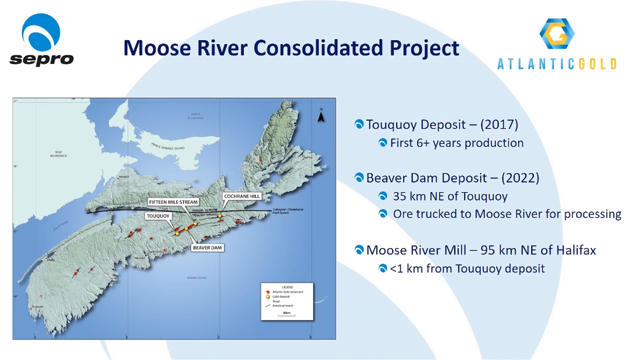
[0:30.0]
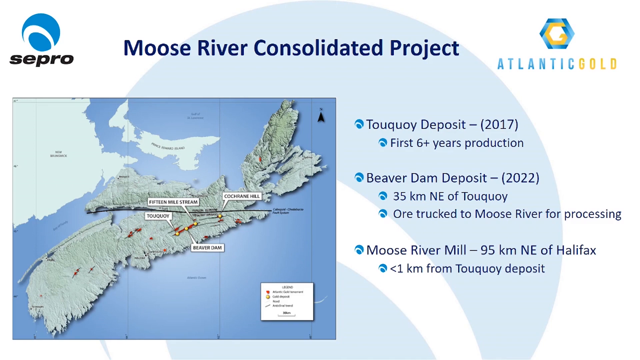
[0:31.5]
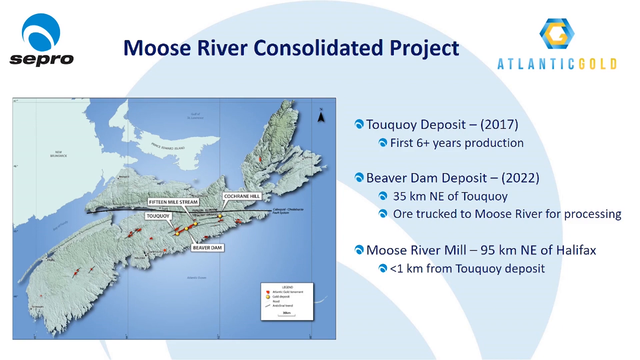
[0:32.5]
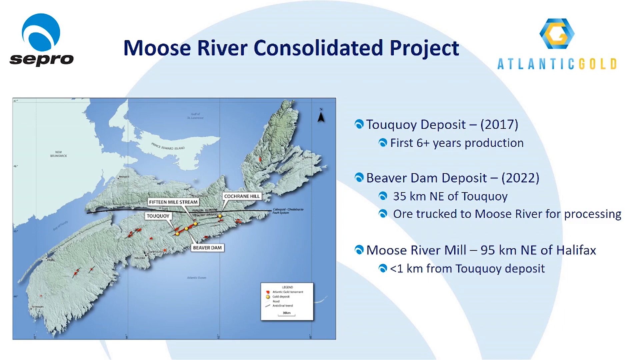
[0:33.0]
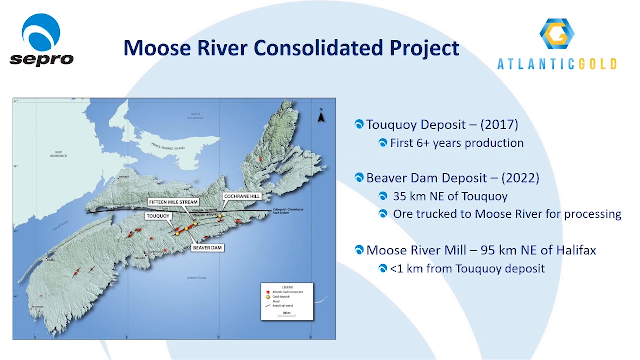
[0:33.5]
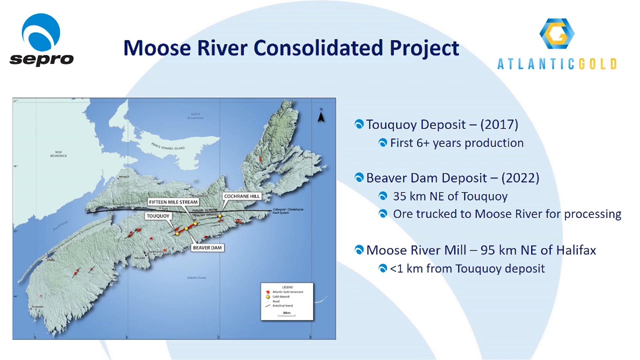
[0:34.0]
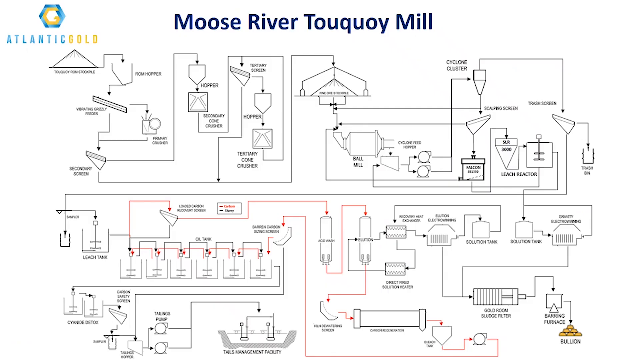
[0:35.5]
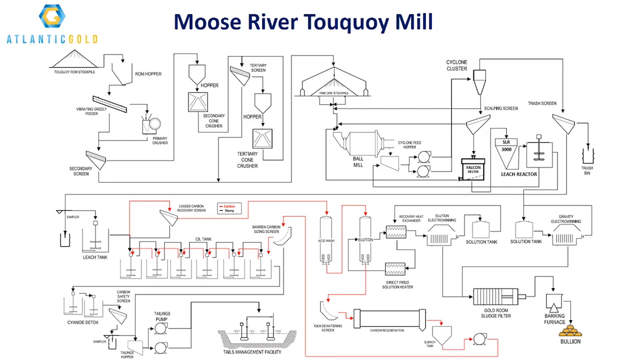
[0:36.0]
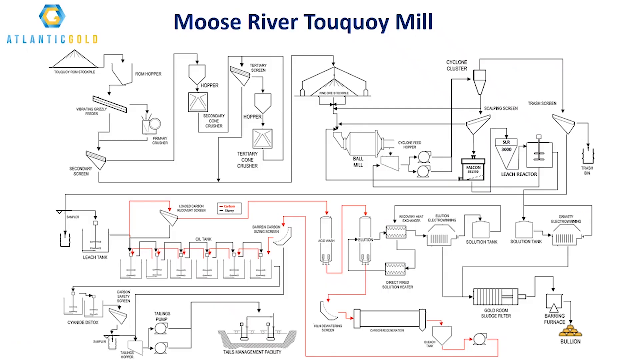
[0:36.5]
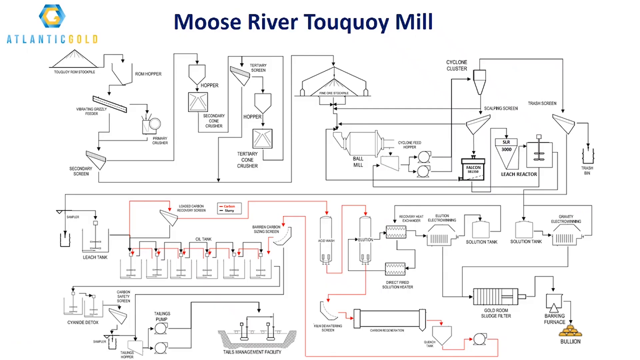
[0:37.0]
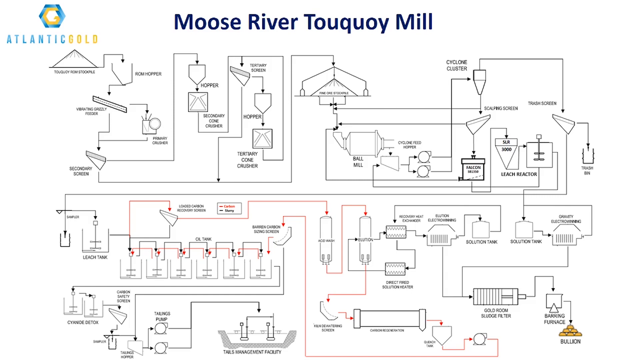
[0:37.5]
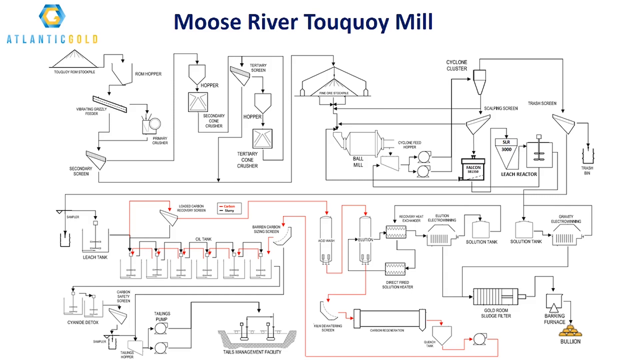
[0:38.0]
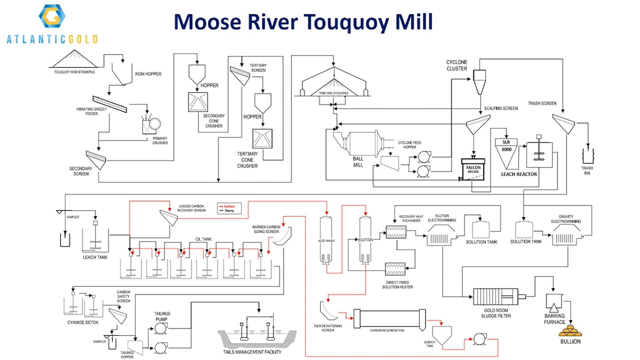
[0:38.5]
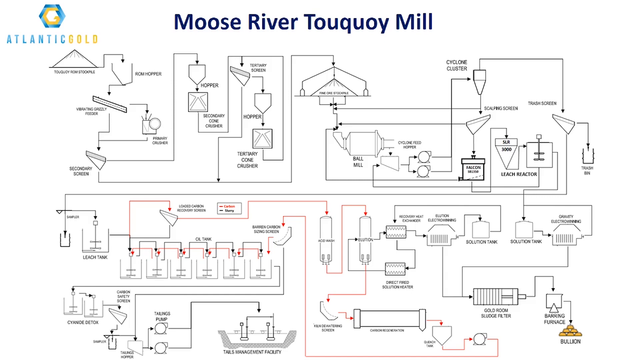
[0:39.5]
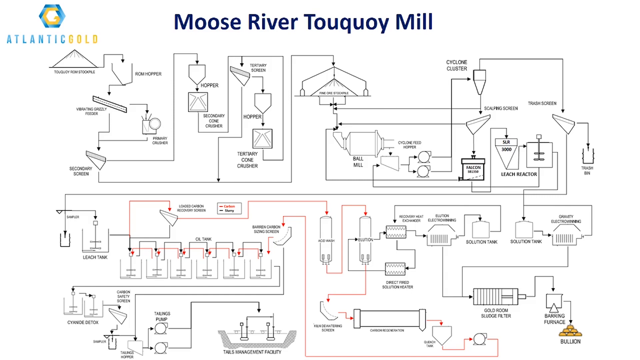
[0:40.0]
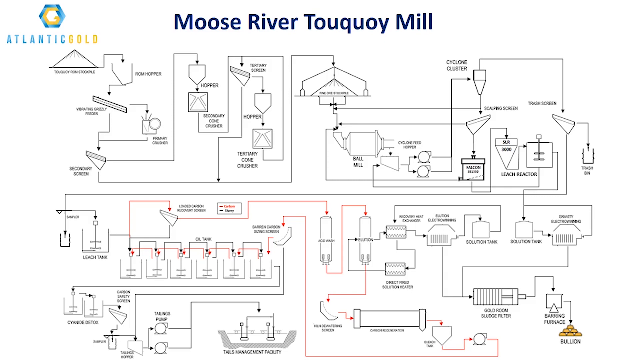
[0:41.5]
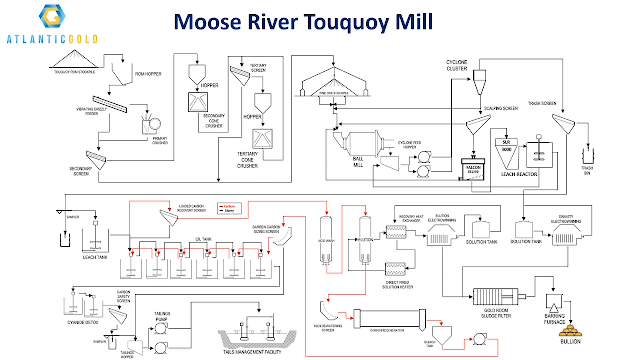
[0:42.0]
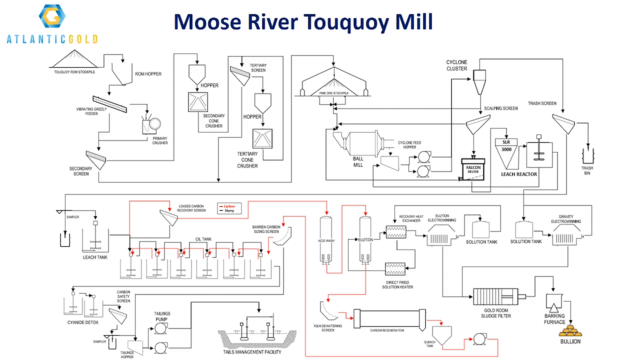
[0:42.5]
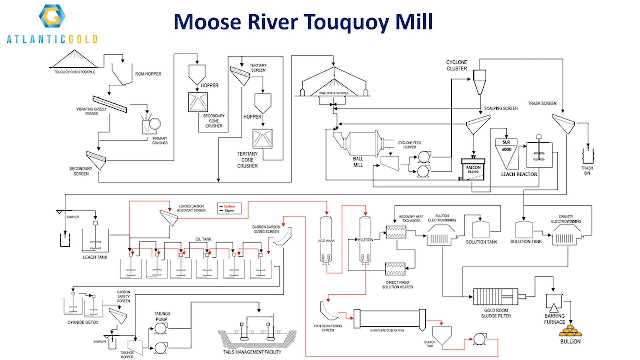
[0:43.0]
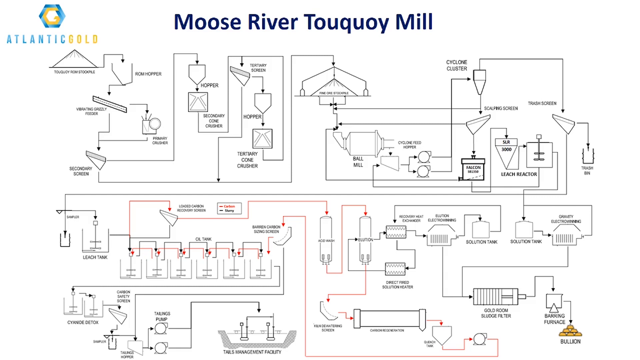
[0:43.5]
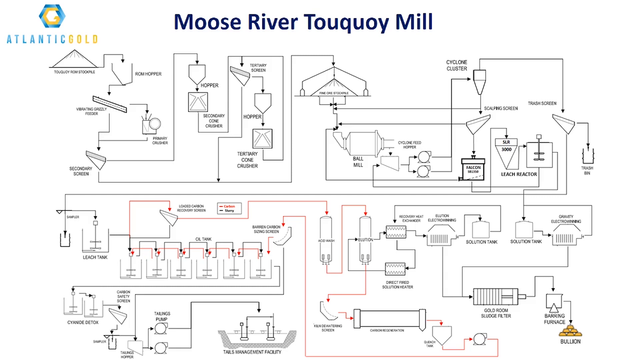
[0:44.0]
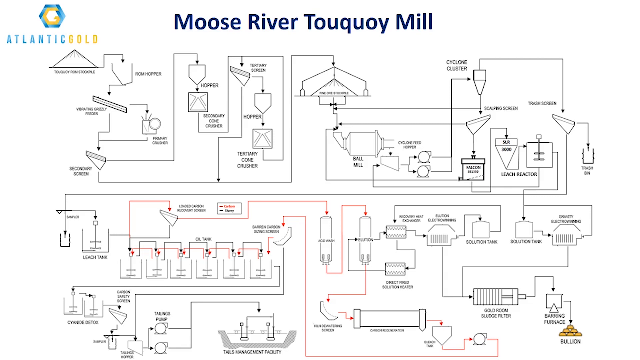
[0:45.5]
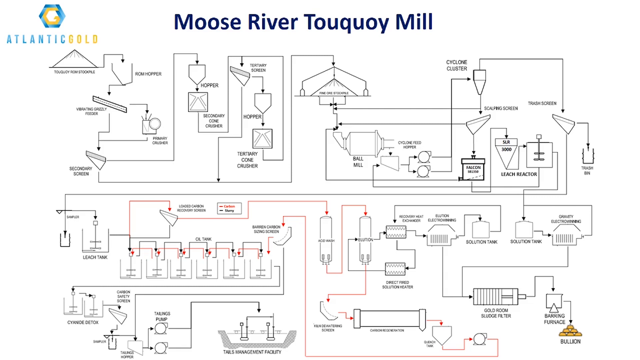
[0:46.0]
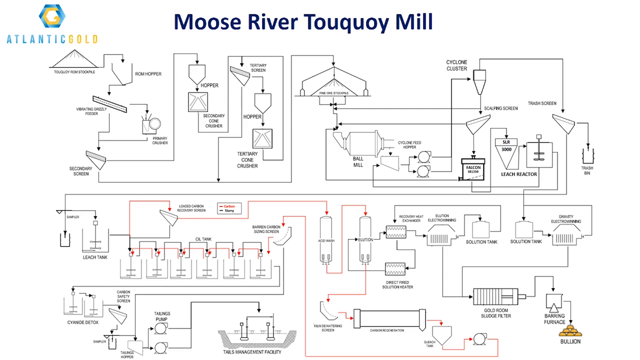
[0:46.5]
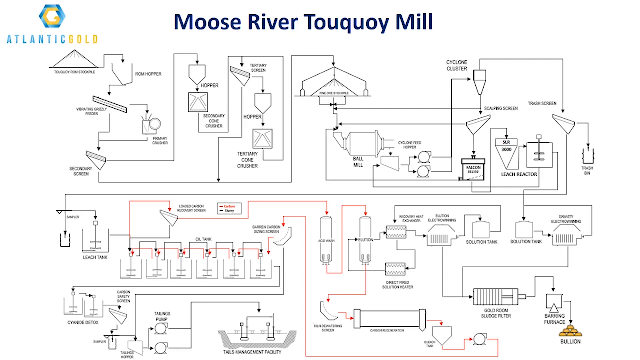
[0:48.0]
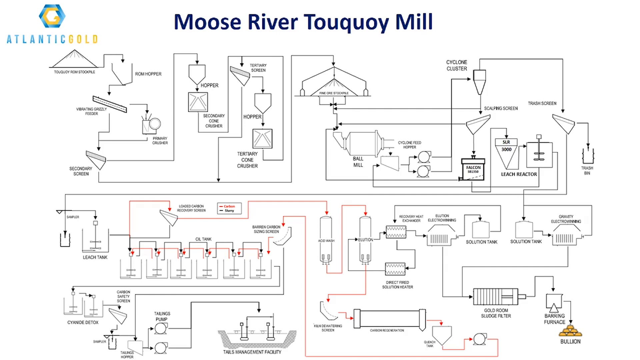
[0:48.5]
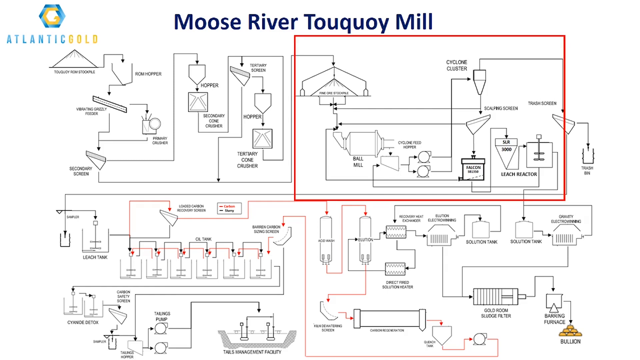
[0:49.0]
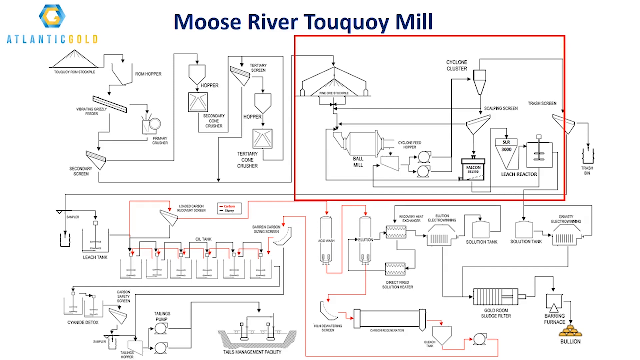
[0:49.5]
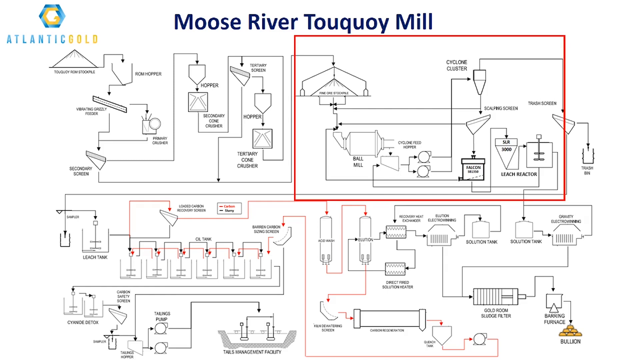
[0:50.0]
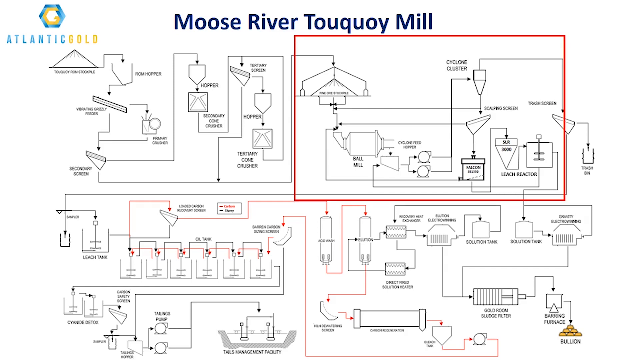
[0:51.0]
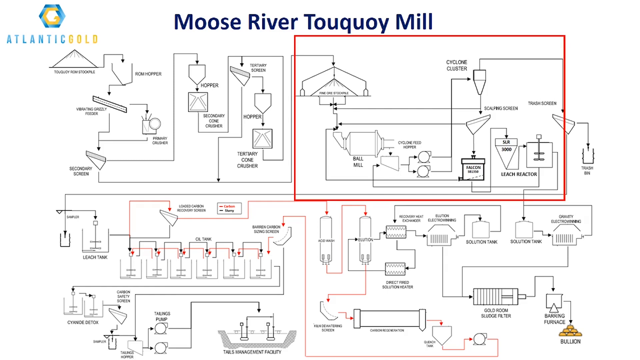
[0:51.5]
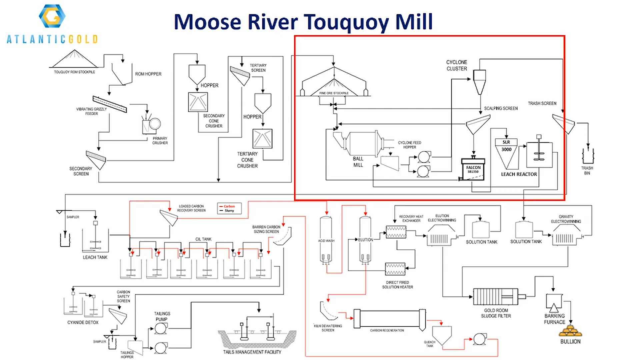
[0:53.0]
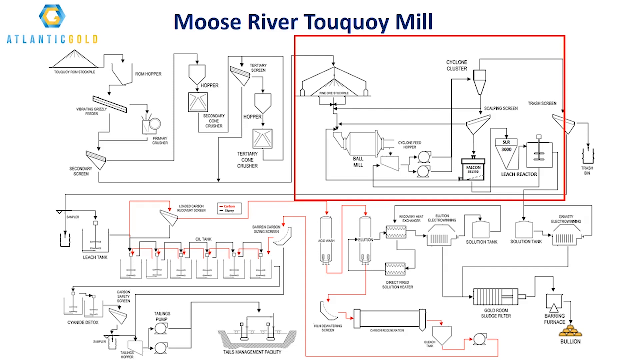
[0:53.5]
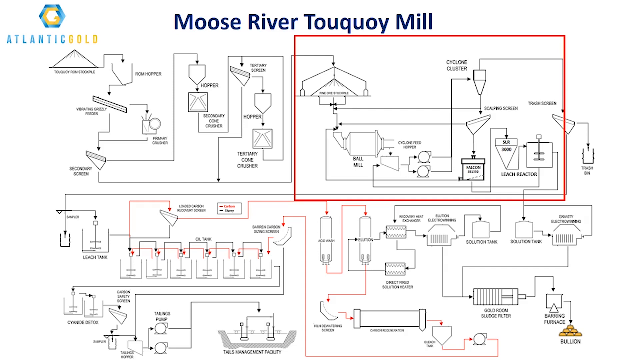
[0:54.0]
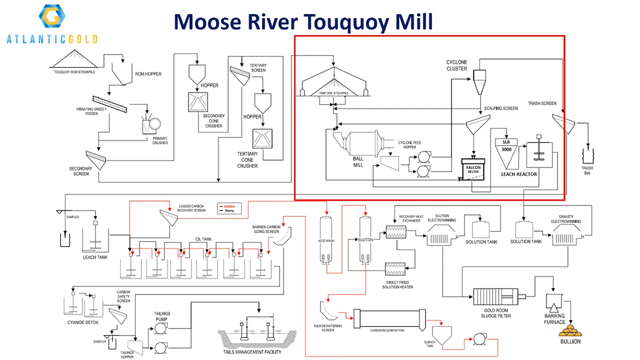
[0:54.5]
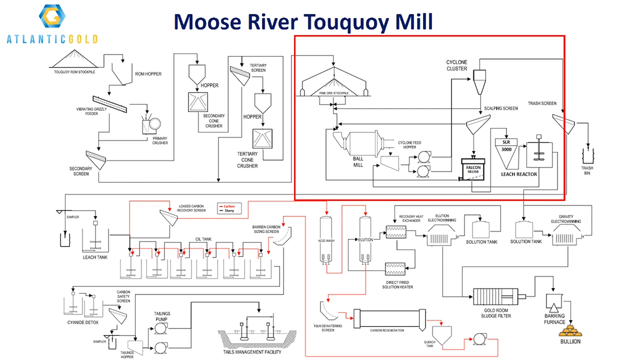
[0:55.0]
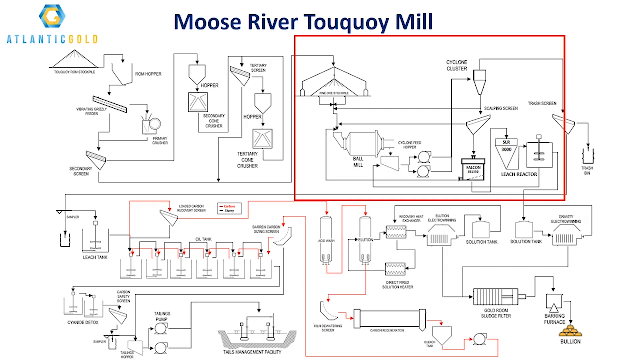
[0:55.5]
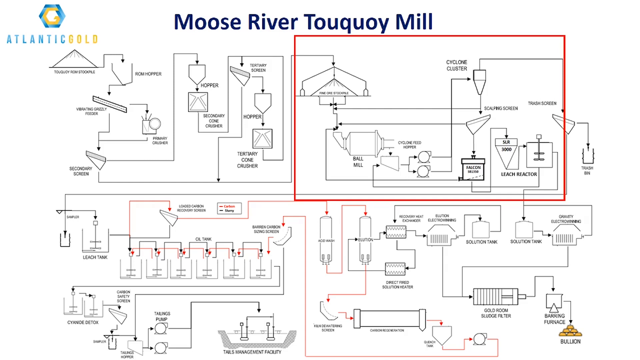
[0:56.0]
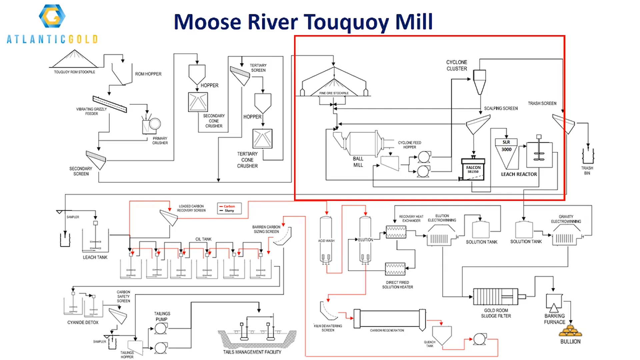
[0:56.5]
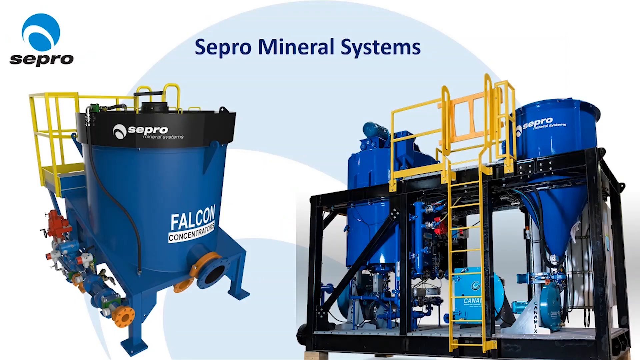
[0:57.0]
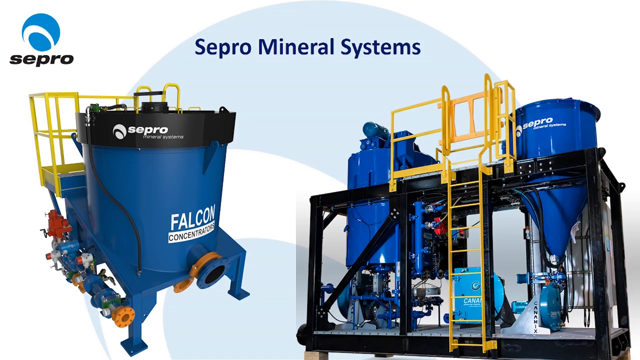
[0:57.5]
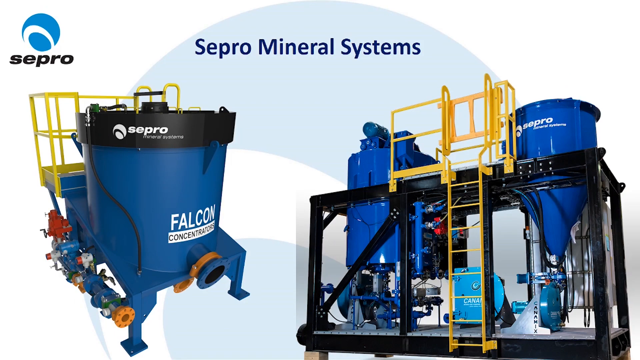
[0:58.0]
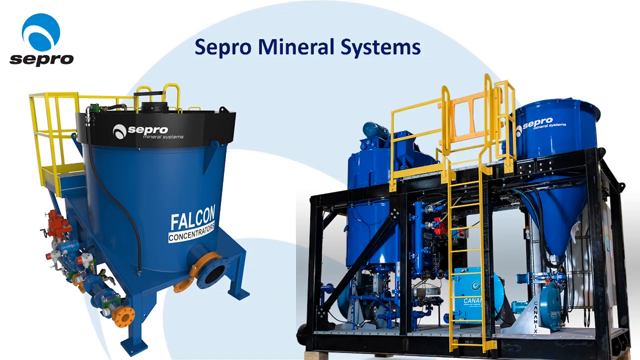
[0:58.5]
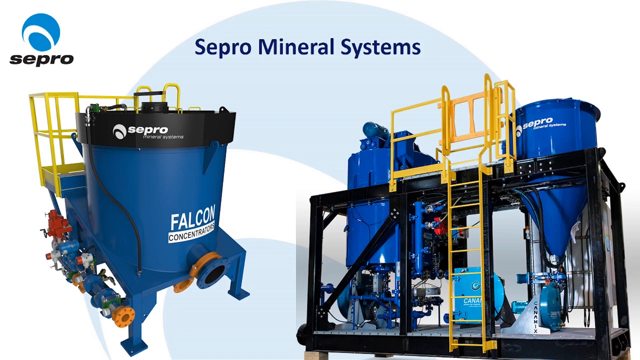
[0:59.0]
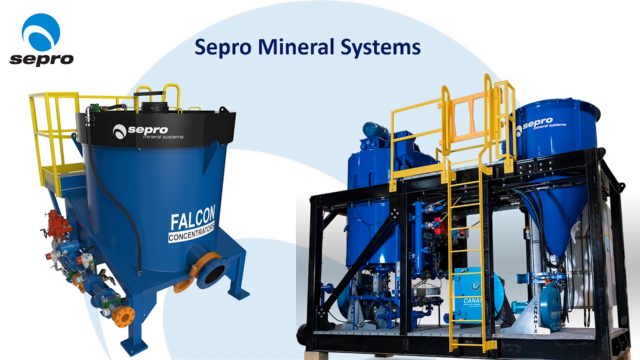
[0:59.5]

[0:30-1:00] An image shows a map with text next to it about the Moose River Consolidated Project. The map takes up three quarters of the page, and the text on the right side explains what the map shows. Next is an image of how the Moose River Touquoy Mill runs, showing all the different steps of the processing. It has a top and a bottom section, and after some time one section is highlighted in red. It covers the processing through the cyclone cluster; some of the text is hard to make out. The diagram starts at the top left-hand side of the page and takes up the entire page. After that comes an image of the Sepro Mineral Systems tanks or machinery, two images side by side.